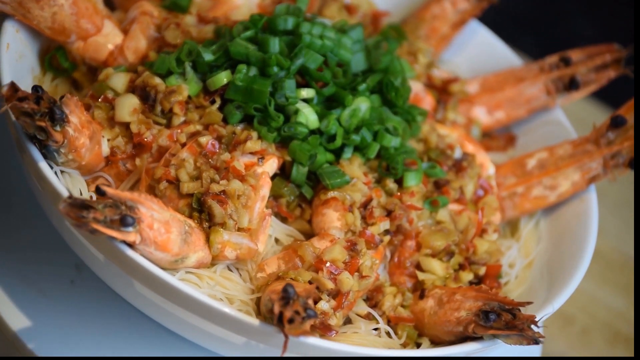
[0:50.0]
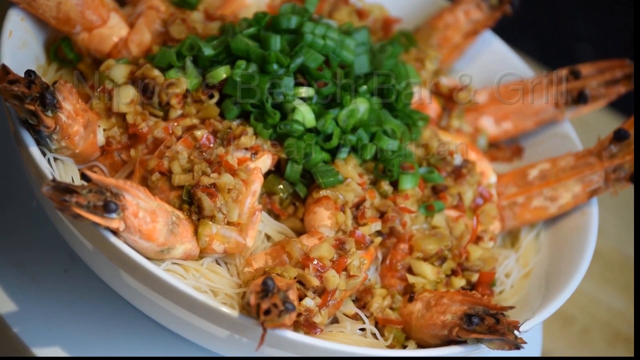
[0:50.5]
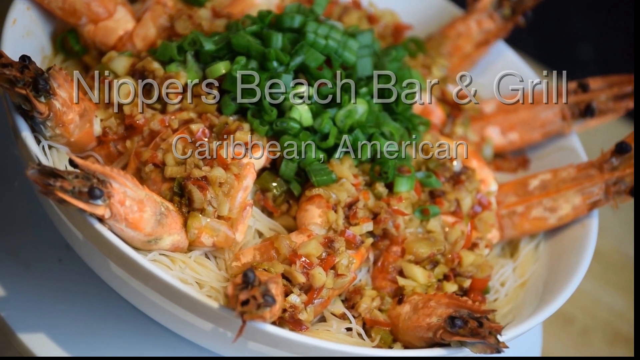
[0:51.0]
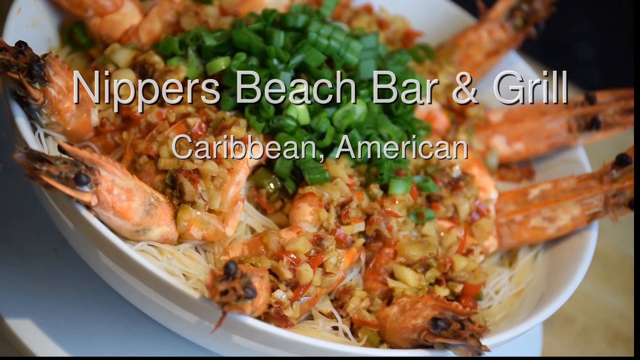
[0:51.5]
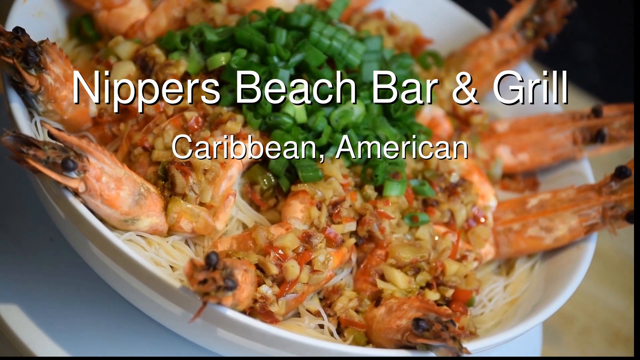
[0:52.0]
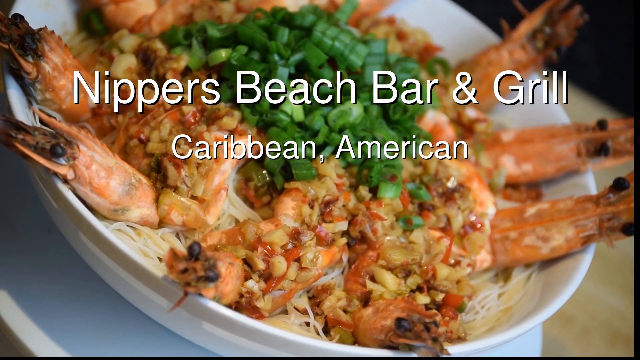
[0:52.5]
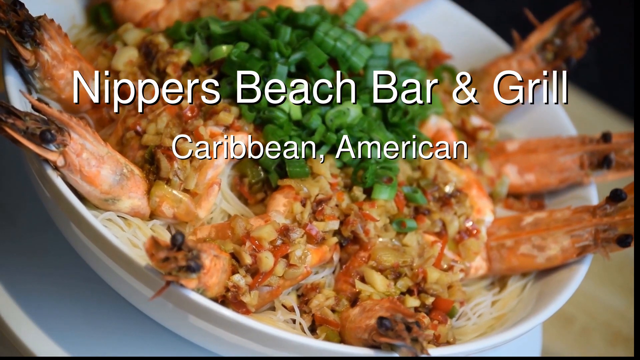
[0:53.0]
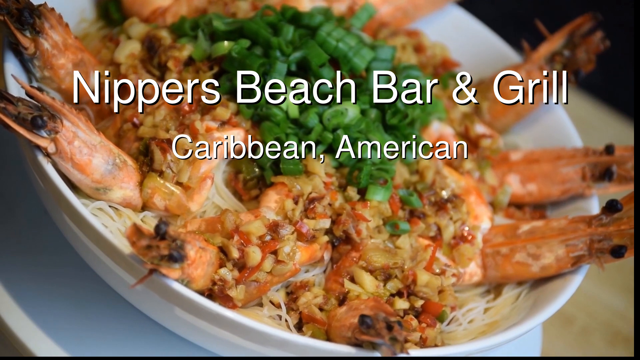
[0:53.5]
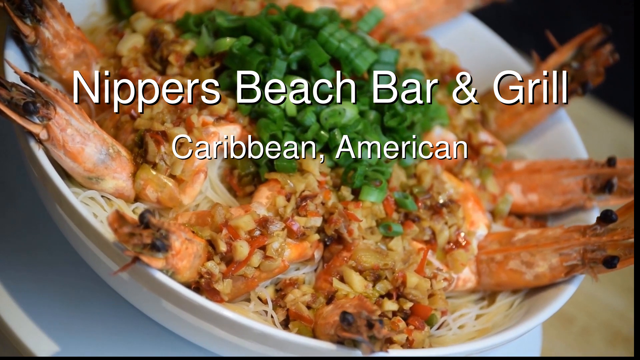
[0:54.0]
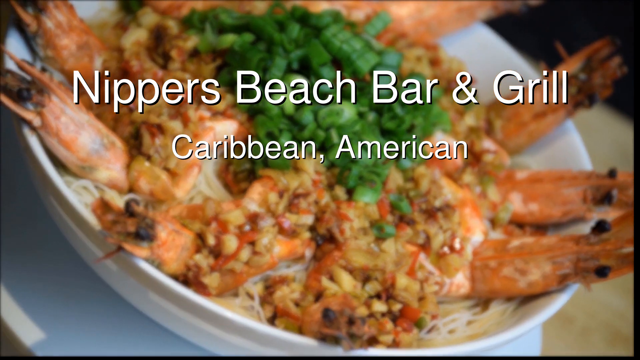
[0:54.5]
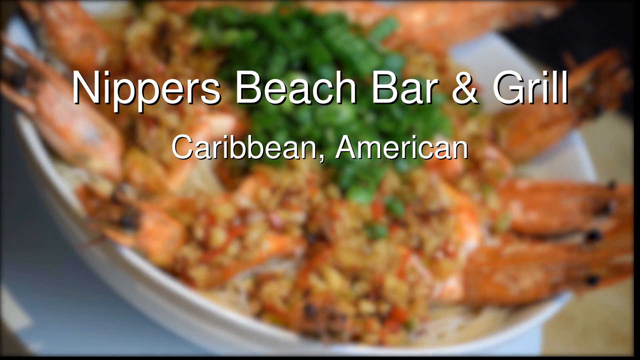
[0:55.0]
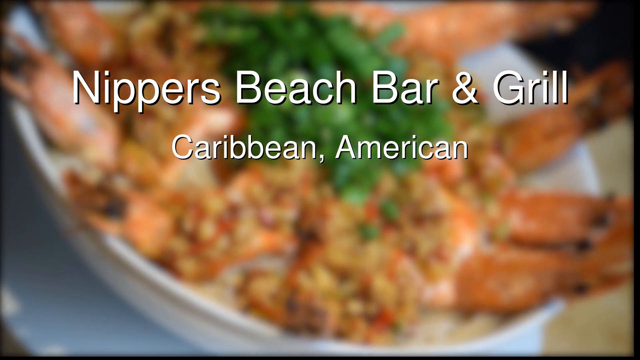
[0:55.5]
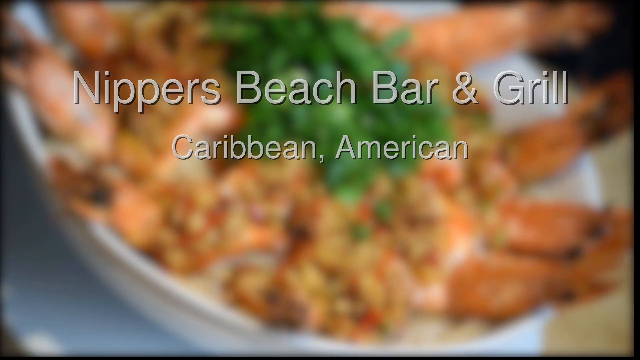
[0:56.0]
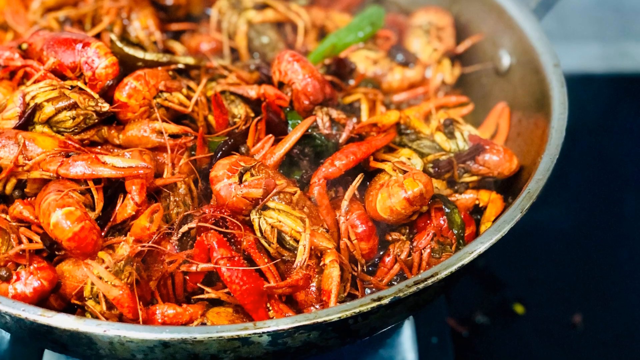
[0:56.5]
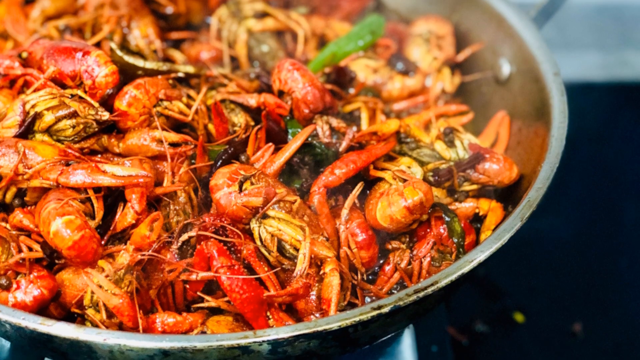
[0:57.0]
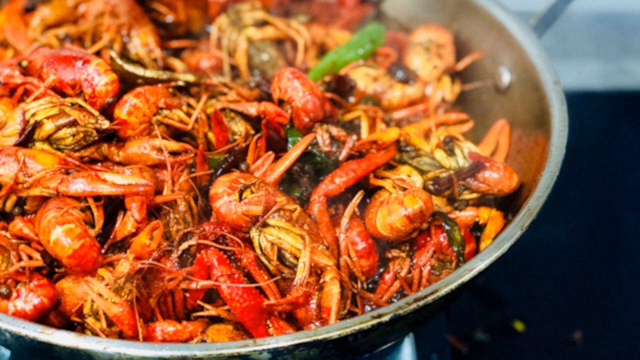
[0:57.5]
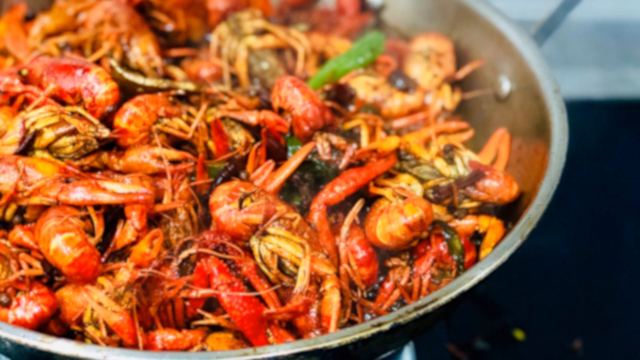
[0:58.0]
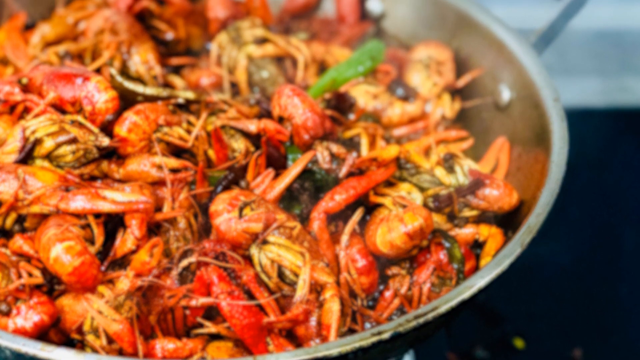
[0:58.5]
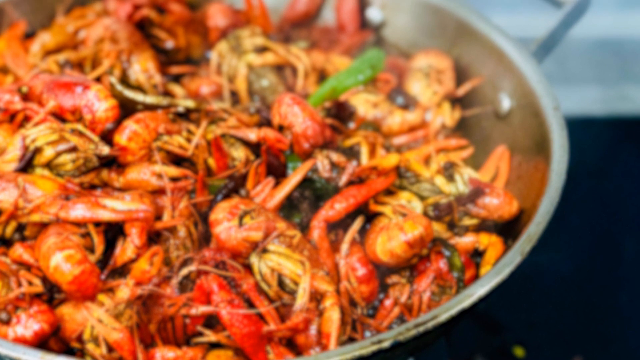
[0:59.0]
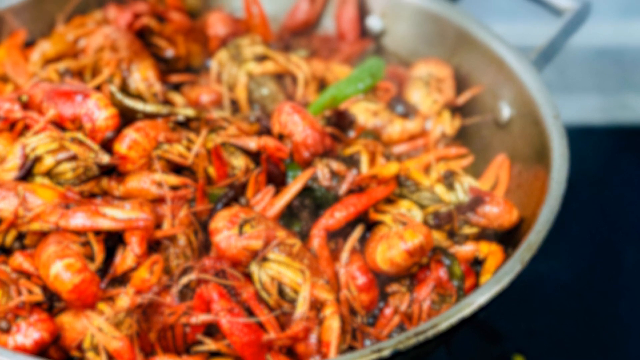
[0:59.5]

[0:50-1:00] The dish continues to spin, and additional white text appears, reading "Nippers Beach Bar and Grill, Caribbean American." The dish and the text sort of fade and blur out, and the video switches to an image of a different type of food that looks like a crawfish boil or fish boil. A large silver stainless steel metal pot most likely contains what looks like boiled crawfish or shrimp. It is a still, non-moving image, and the view pans upward.